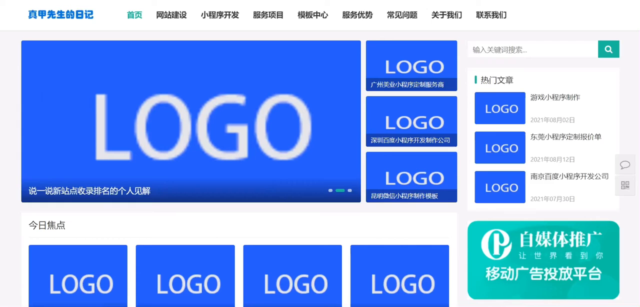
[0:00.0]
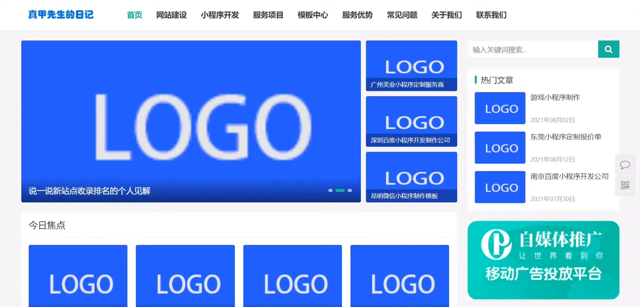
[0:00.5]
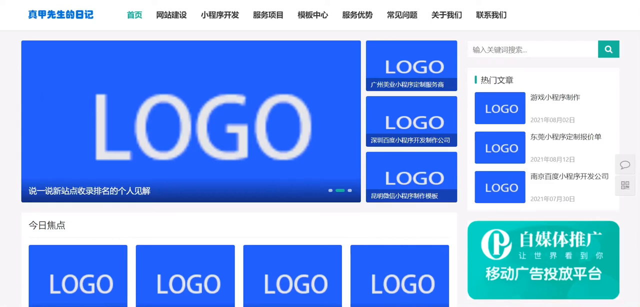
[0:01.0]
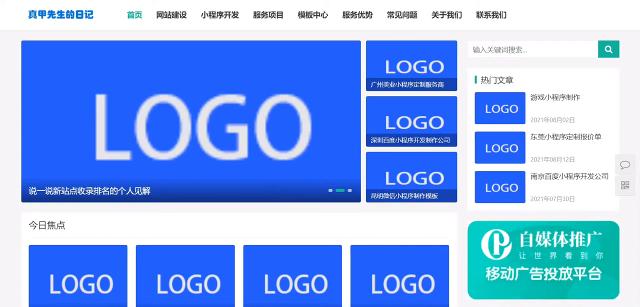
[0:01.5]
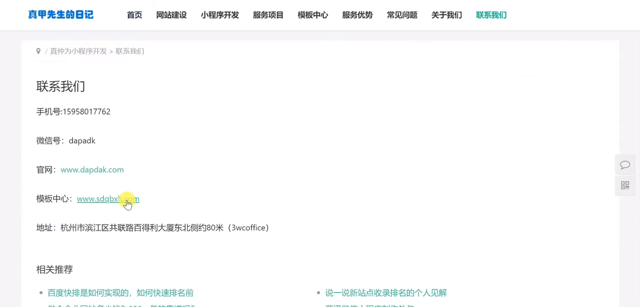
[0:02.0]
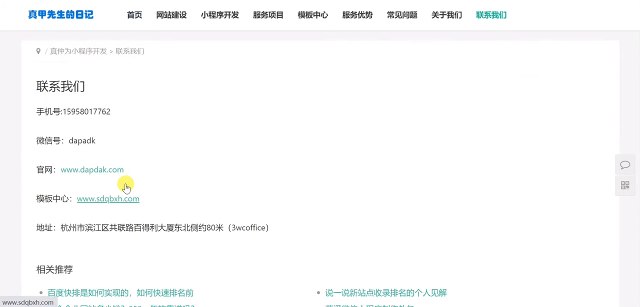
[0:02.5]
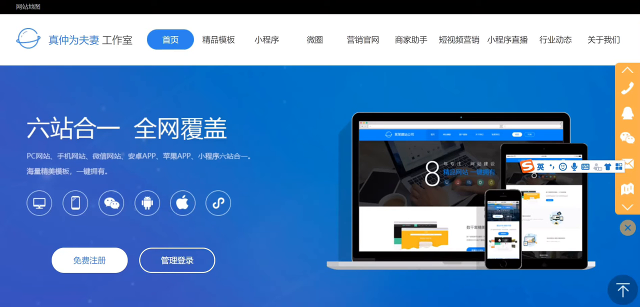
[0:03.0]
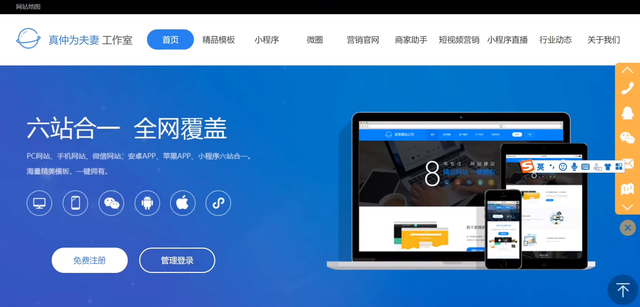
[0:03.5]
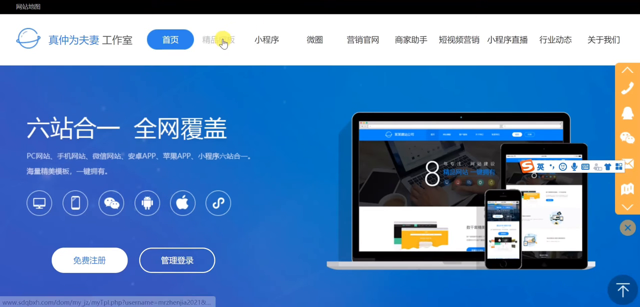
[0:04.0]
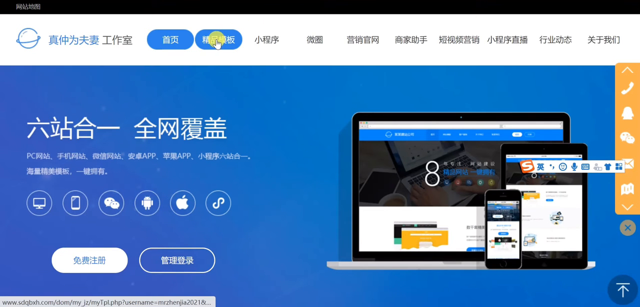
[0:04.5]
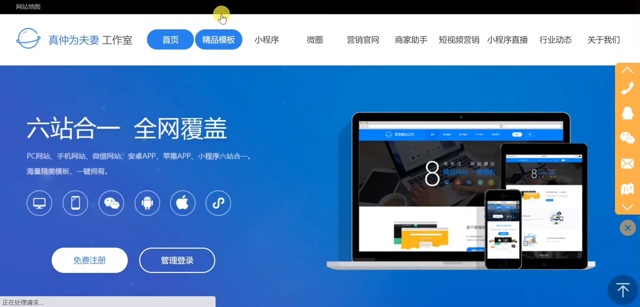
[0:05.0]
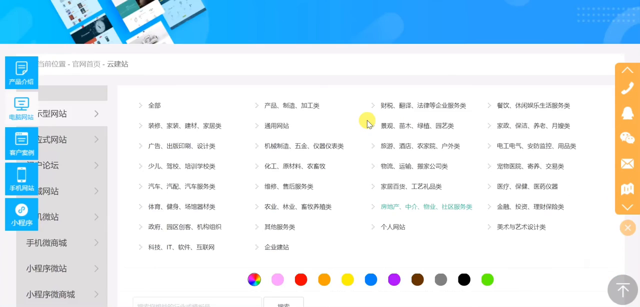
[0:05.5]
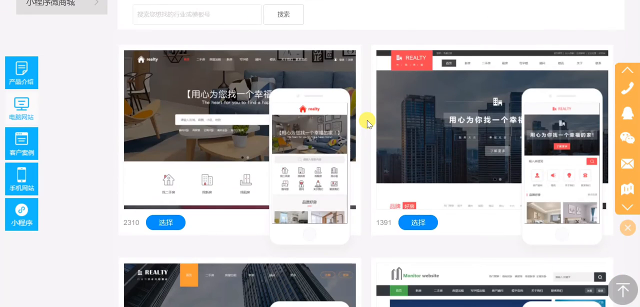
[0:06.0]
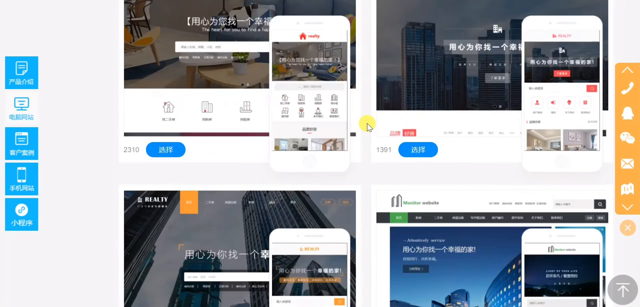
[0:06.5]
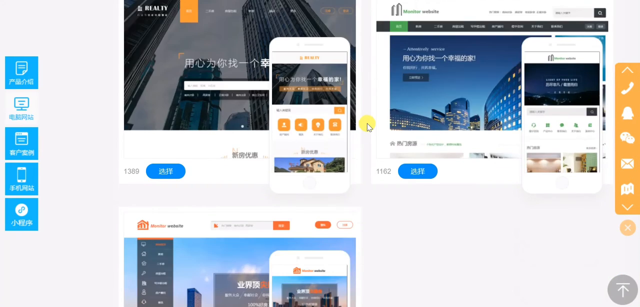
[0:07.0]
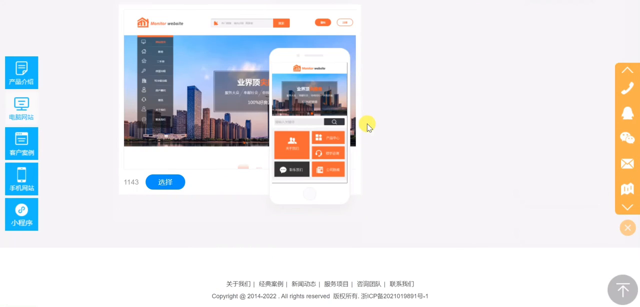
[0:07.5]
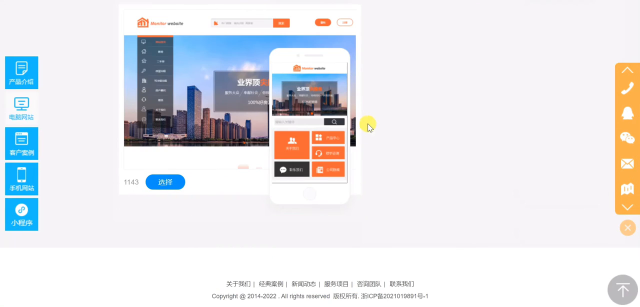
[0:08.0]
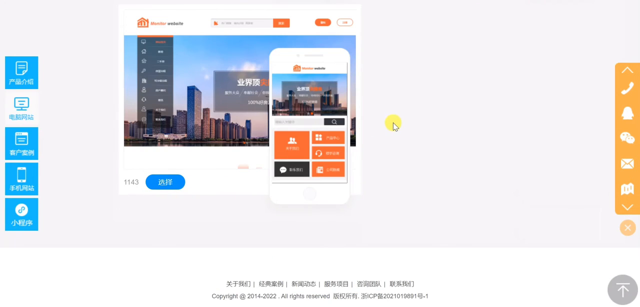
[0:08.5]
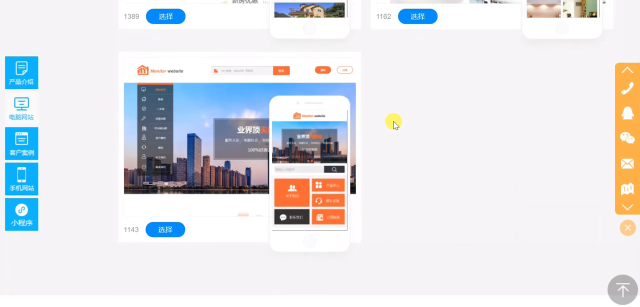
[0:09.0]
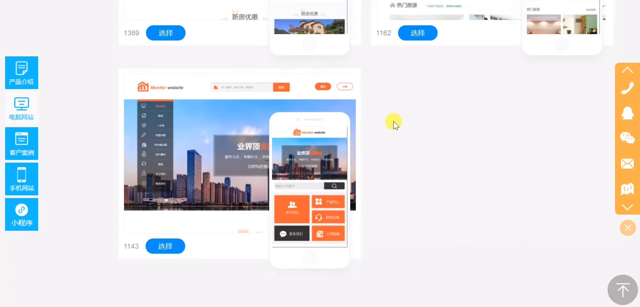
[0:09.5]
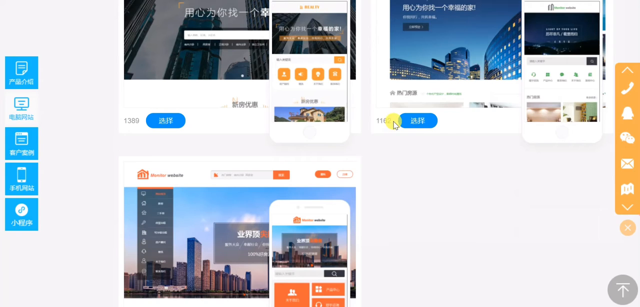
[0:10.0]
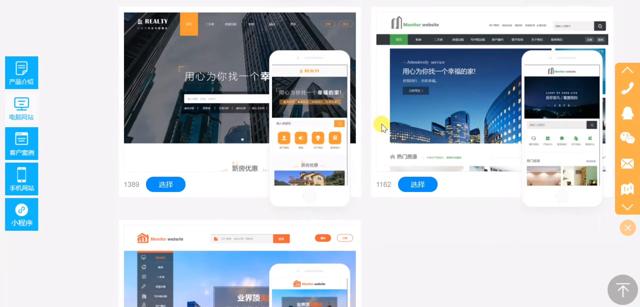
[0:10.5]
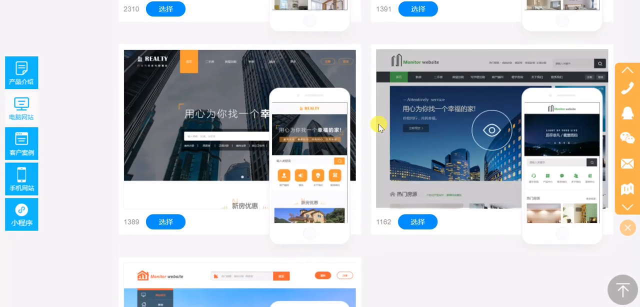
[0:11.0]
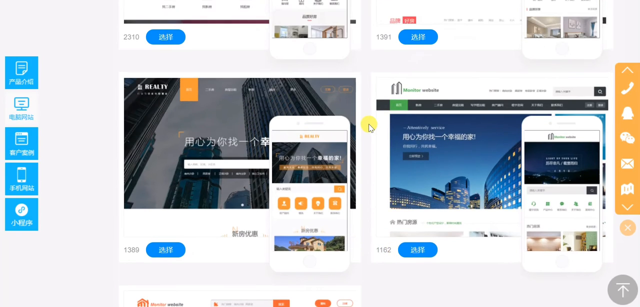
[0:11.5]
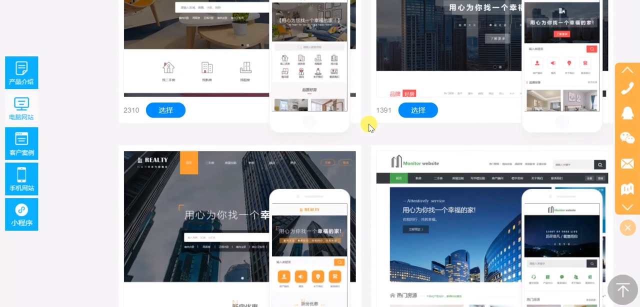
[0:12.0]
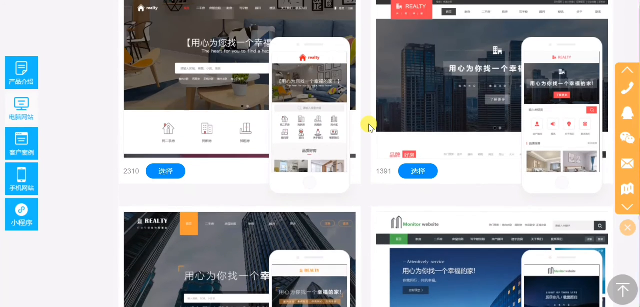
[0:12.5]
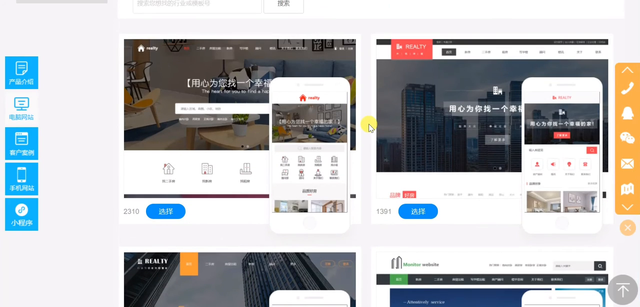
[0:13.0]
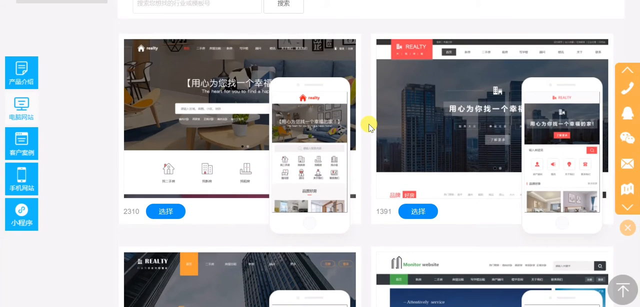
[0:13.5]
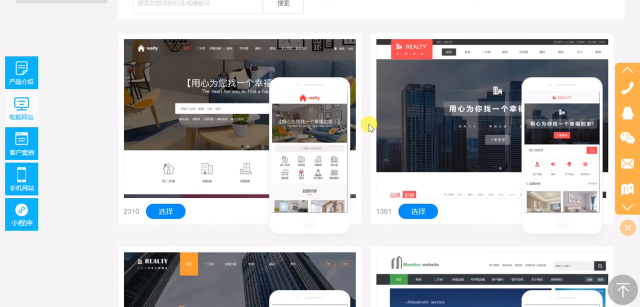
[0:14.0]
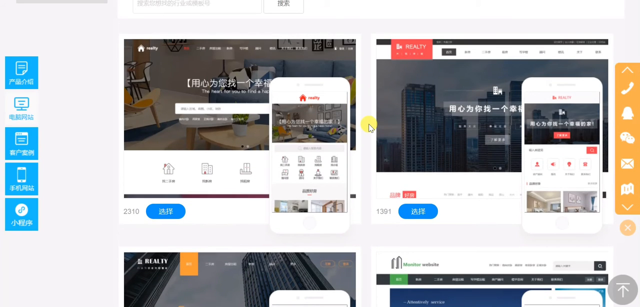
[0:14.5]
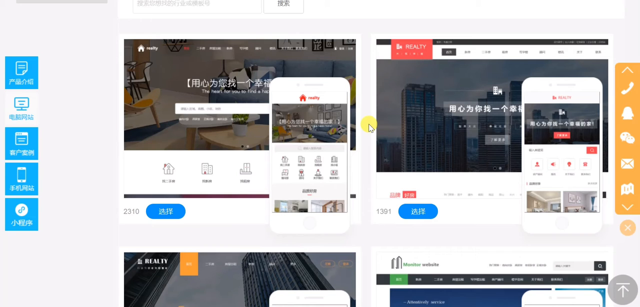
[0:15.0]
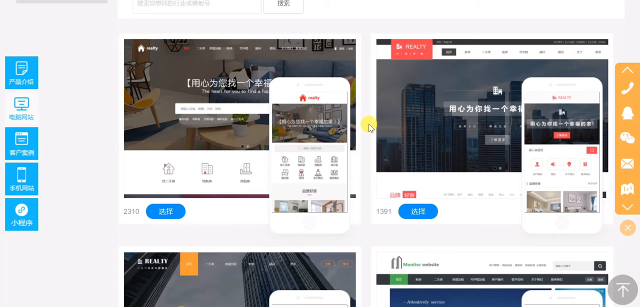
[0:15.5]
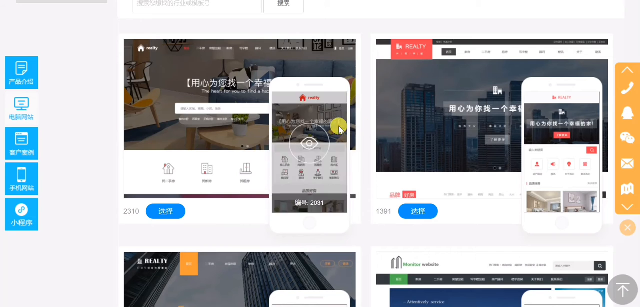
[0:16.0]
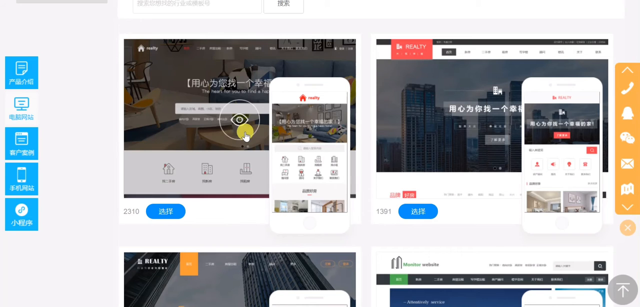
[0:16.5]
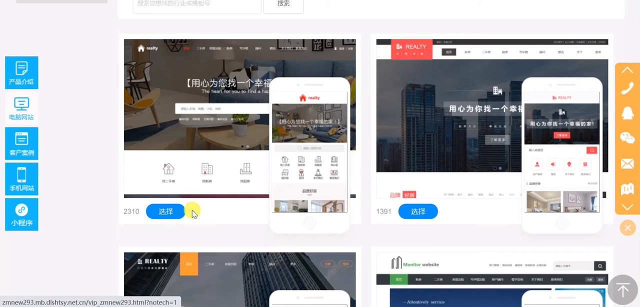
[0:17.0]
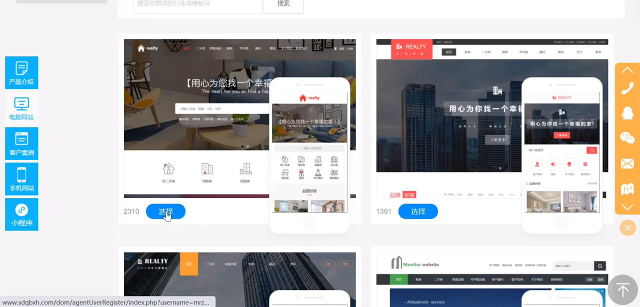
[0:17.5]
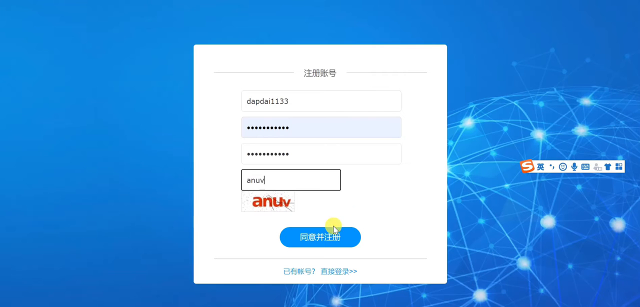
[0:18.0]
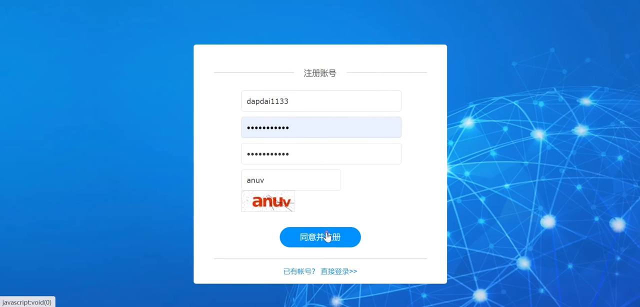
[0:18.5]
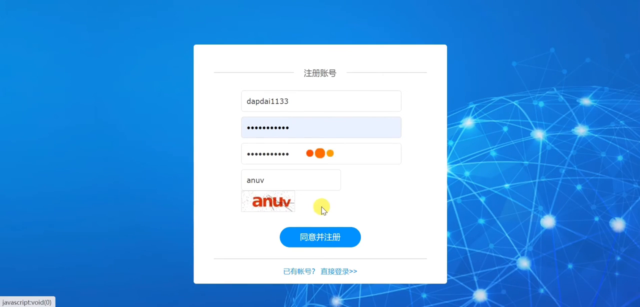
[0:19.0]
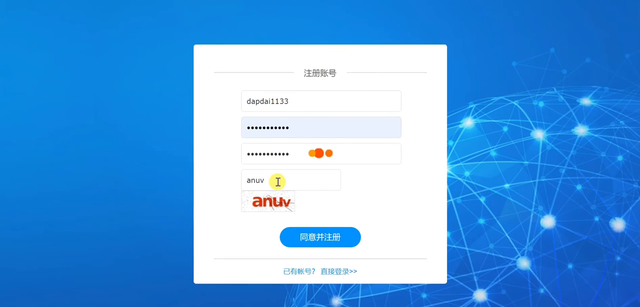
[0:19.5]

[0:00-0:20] What appears to be a tutorial on using a particular template opens with many placeholder images that read "logo" in white on a blue background: four at the top, three along the right-hand side and four in the center, with additional other ads in aqua. Along the top line there is a subject followed by titles for different sections, almost like a WordPress pattern, along with a search bar. All the characters on the screen are in an Asian language, possibly Chinese or Japanese; the only English is the word "logo" used as a placeholder. A cursor comes into view and switches over to a site where multiple WordPress or some other sort of web templates can be bought. The templates all have different formats and are all in Asian characters, as is the rest of the menu, except for a series of icons along the right-hand side of the screen: a chat box and bubbles for different contact functions, including an envelope, a telephone and a map. The cursor moves quickly and clicks through multiple options before settling on one and clicking into a demo site for a WordPress website.